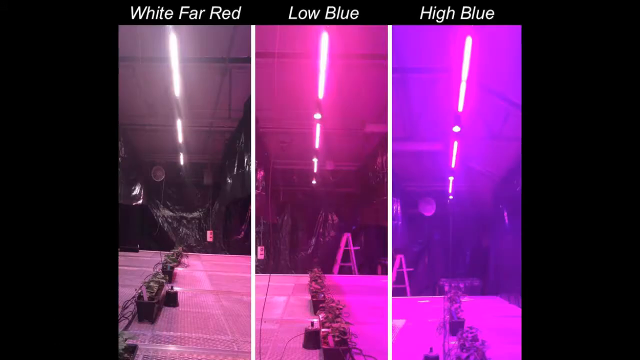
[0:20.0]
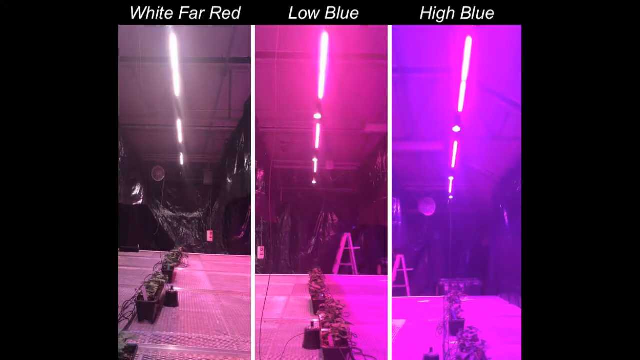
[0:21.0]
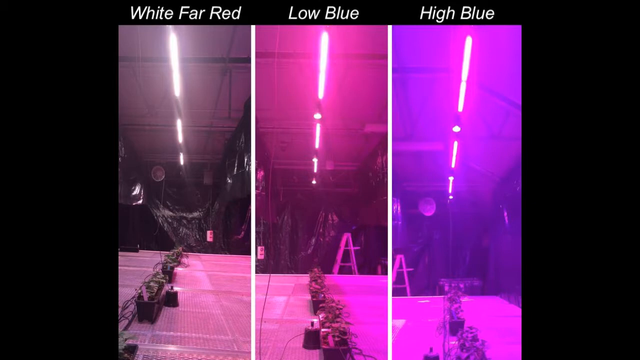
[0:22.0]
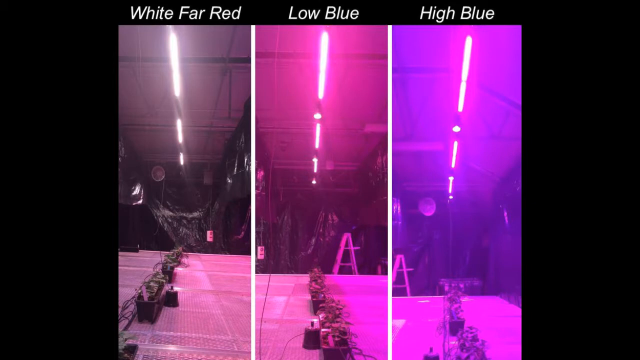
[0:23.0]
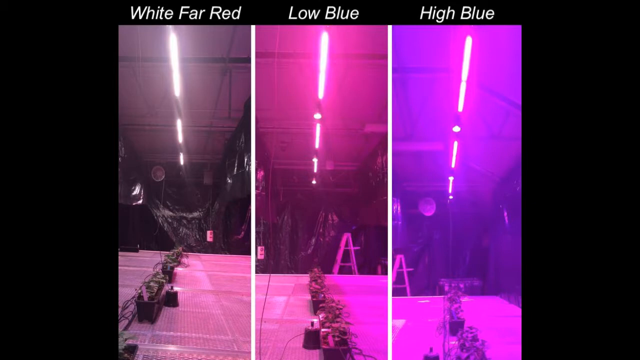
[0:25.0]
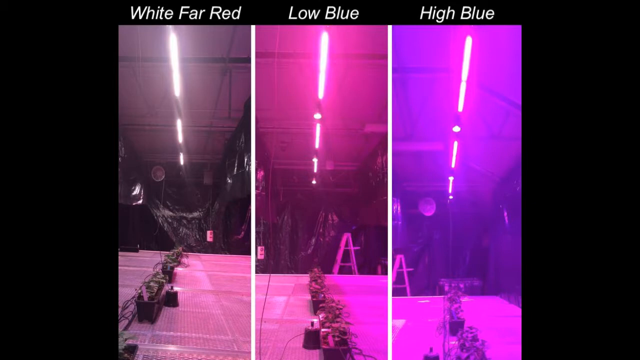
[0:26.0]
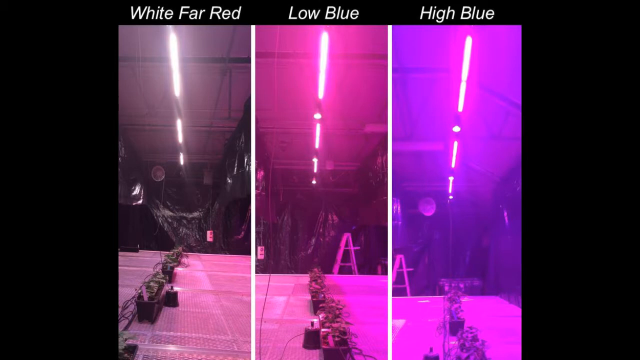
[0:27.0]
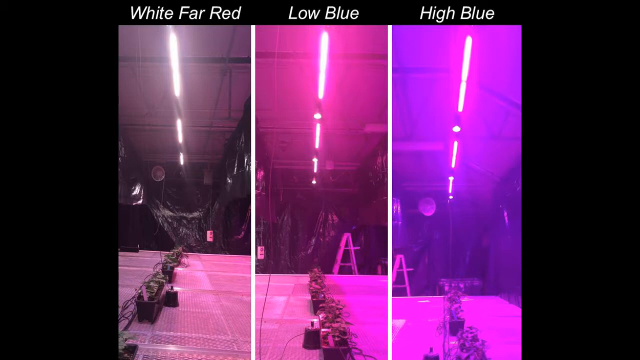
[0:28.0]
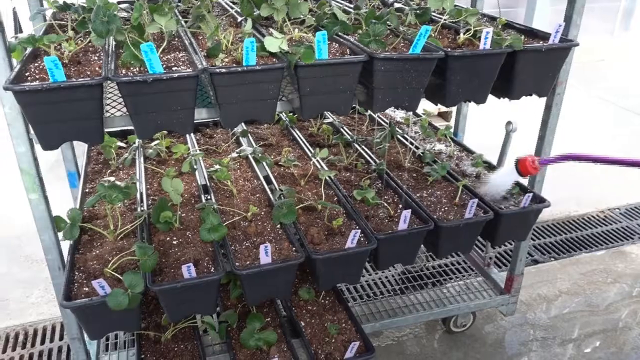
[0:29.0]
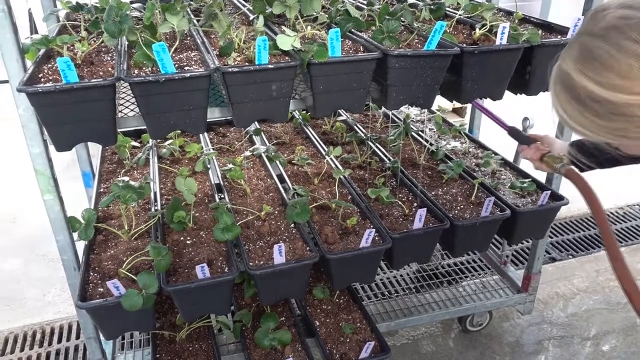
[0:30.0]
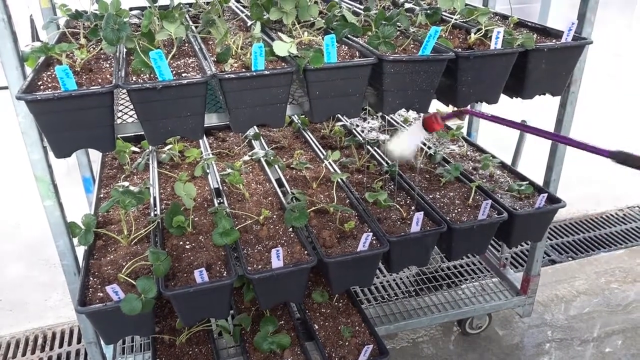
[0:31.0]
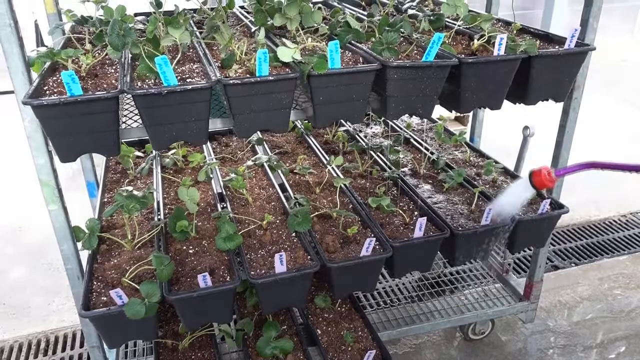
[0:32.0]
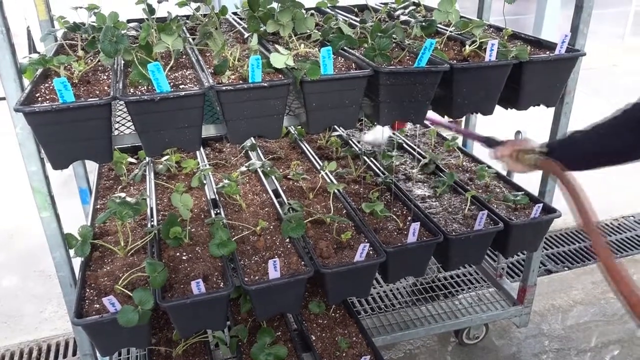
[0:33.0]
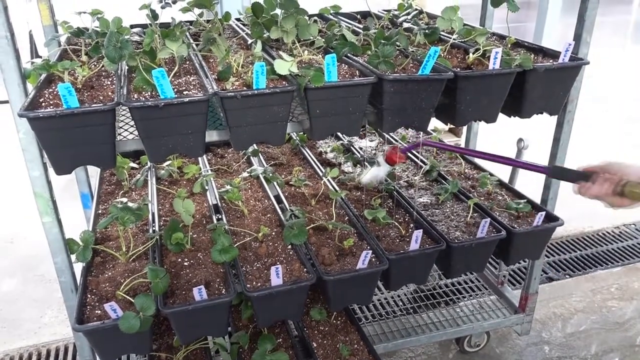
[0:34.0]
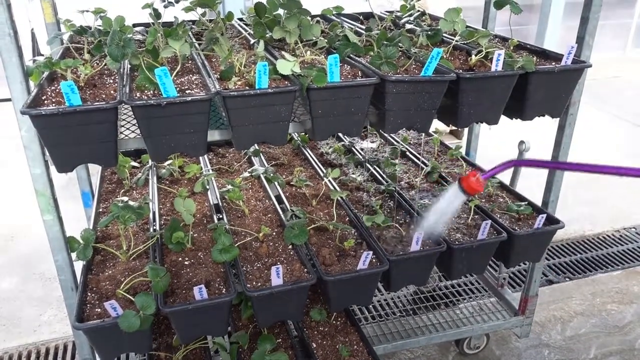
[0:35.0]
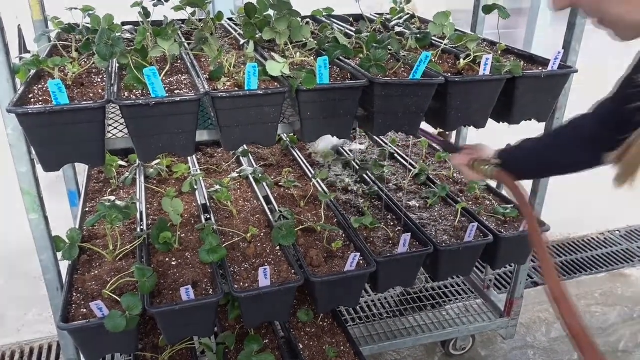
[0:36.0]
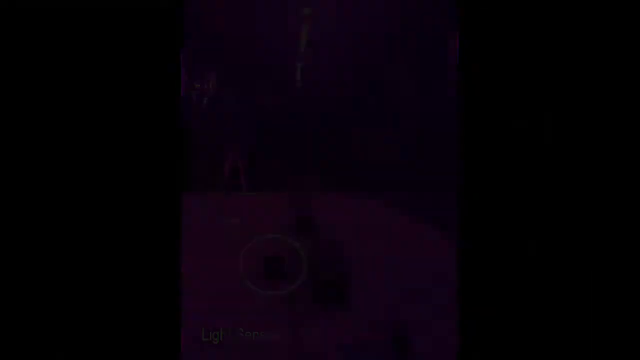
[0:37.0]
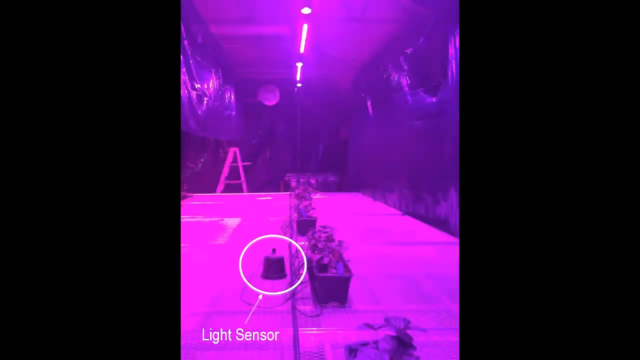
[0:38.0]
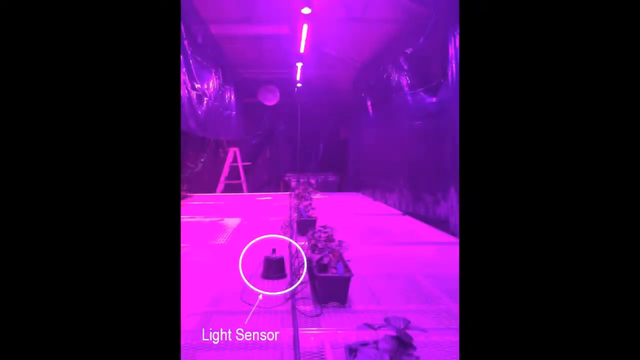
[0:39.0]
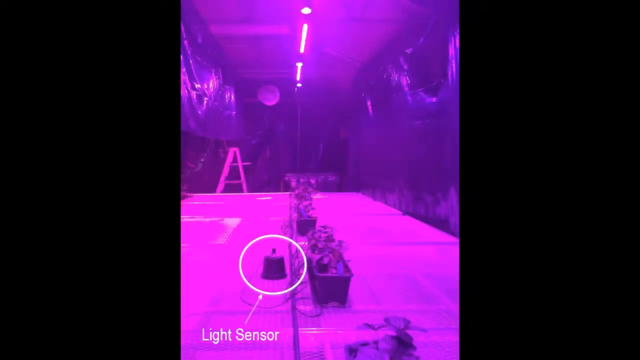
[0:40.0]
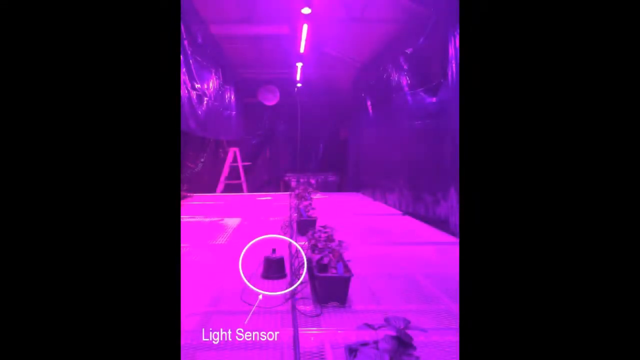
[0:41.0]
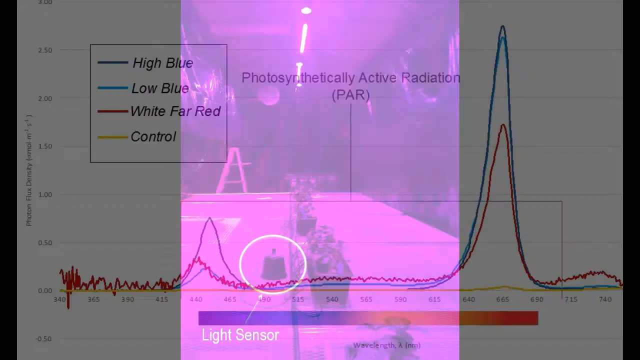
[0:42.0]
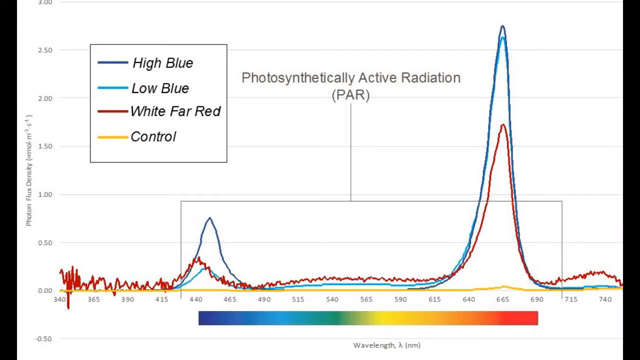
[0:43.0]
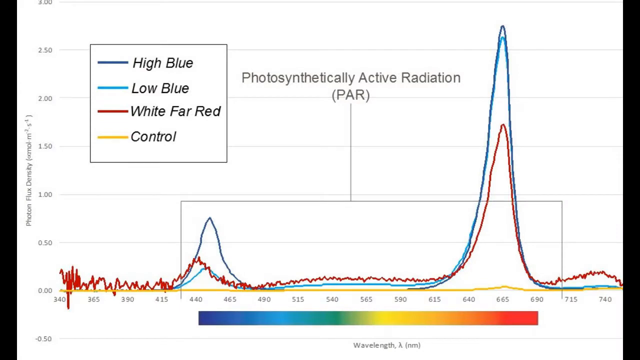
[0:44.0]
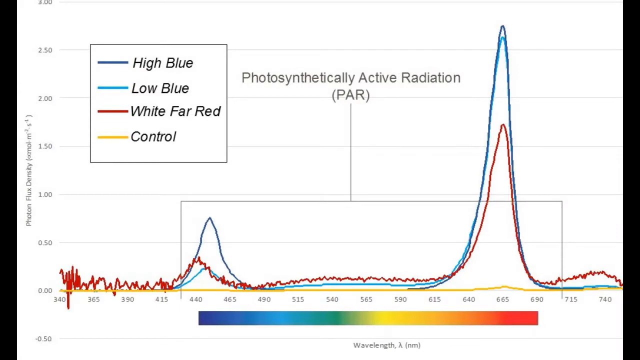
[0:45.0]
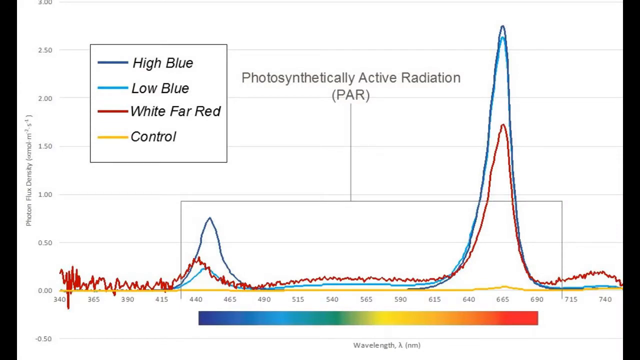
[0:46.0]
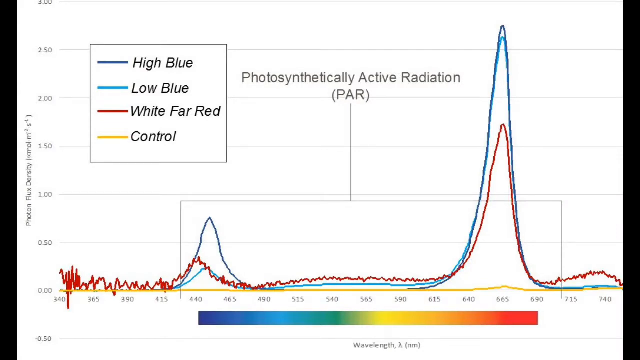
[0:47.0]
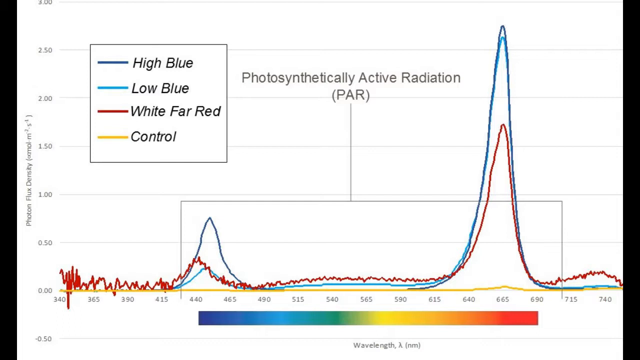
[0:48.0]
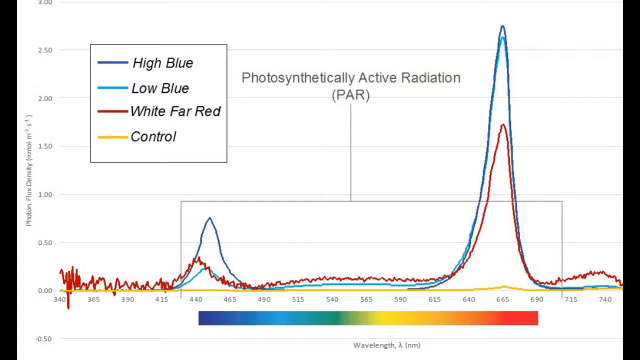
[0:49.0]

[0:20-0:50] Three variations of the vertical ceiling light are presented left, middle and right. The left one is titled "white, far red" and looks black and white, very dull with little color; the middle one is titled "low blue" and looks very purple; the right one is titled "high blue" and looks a more intense purple. The scene changes to a woman watering planter boxes on a shelf, using a very long purple extender connected to a light red hose and spraying the planters in the middle of the rack; the planter boxes hold dirt with plants growing from them. Next is a picture of the inside of a greenhouse with the straight vertical purple ceiling light turned on, making the room look very purple at the bottom and on the ground. There are planter boxes of plants and a pot flipped upside down, with a circle around this plant labeled "Light sensor." A line graph then appears, titled at the top "photosynthetically active radiation"; the lines are very low on the left side, with a spike around the 440 to 465 area and a very large spike in the 640 to 665 area.